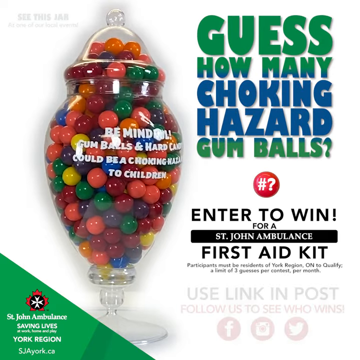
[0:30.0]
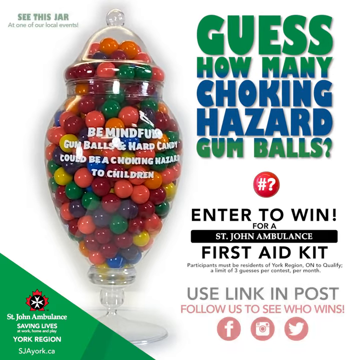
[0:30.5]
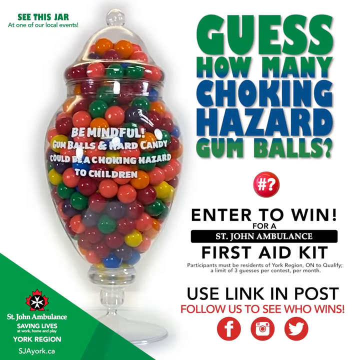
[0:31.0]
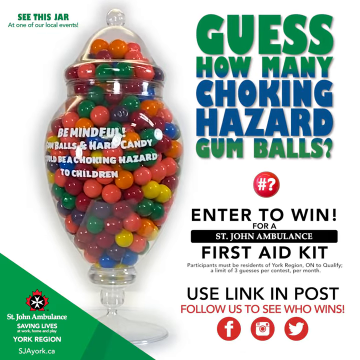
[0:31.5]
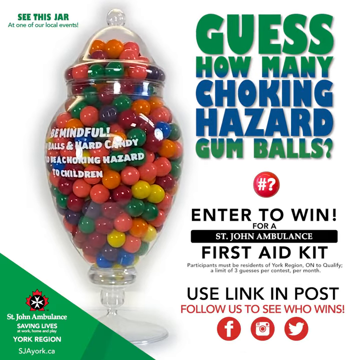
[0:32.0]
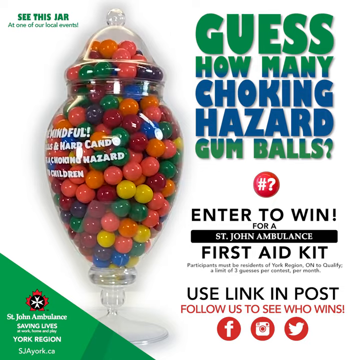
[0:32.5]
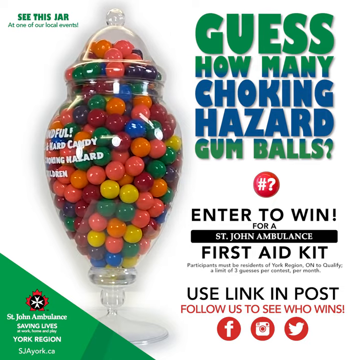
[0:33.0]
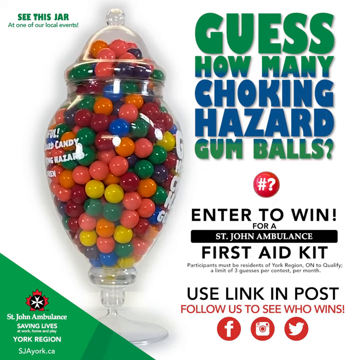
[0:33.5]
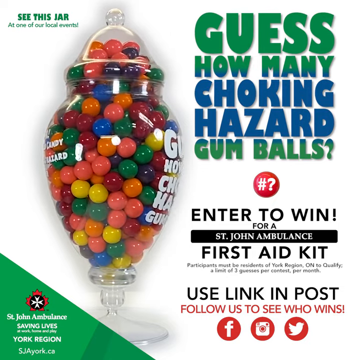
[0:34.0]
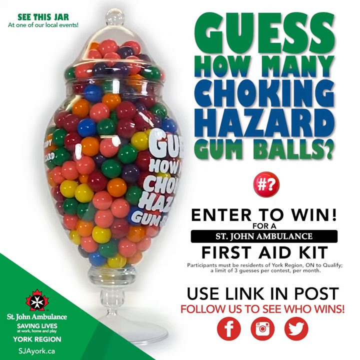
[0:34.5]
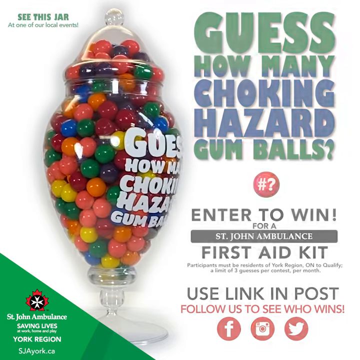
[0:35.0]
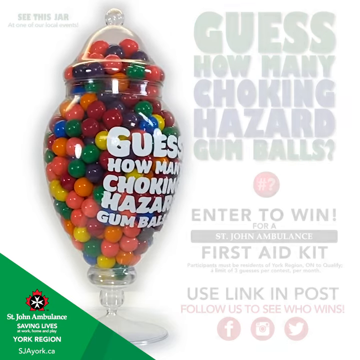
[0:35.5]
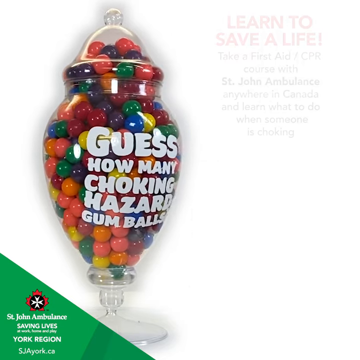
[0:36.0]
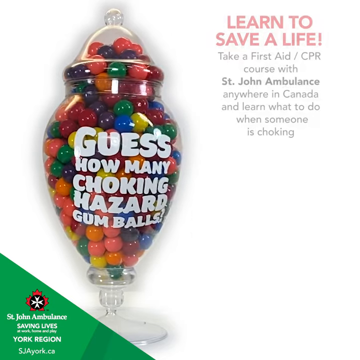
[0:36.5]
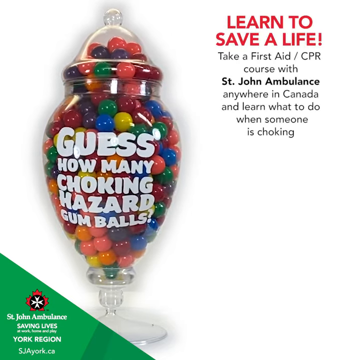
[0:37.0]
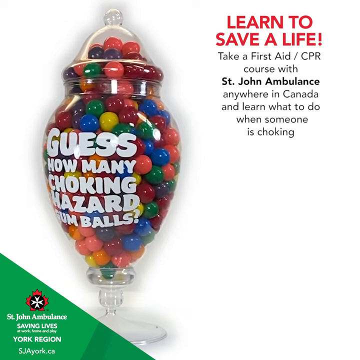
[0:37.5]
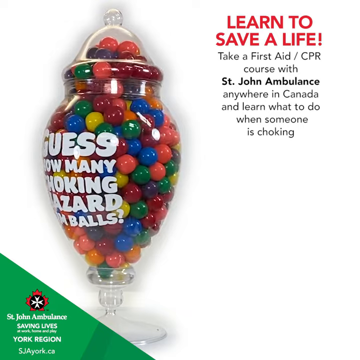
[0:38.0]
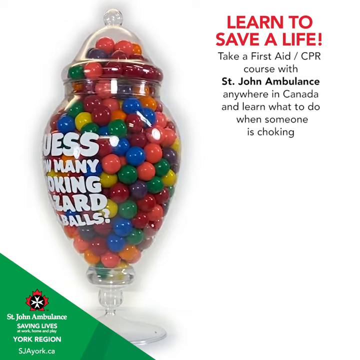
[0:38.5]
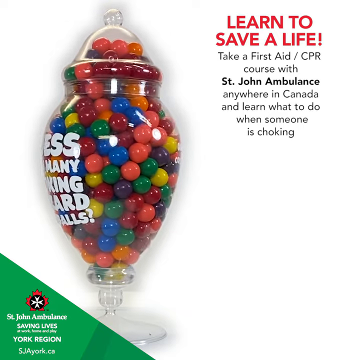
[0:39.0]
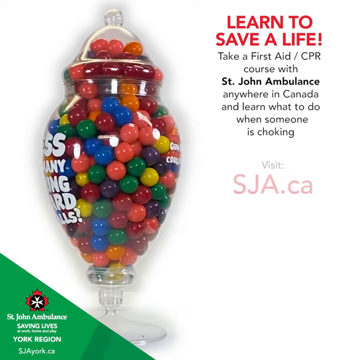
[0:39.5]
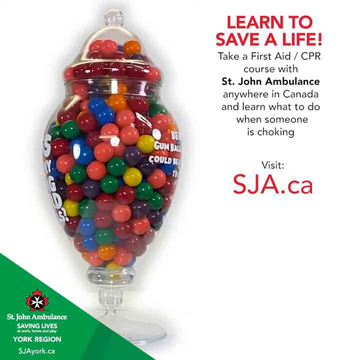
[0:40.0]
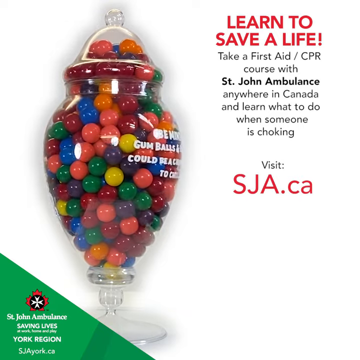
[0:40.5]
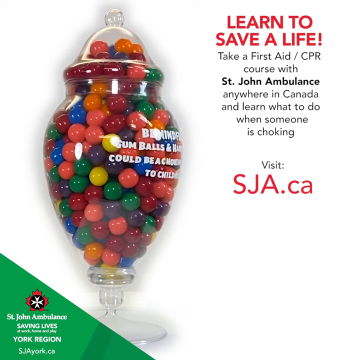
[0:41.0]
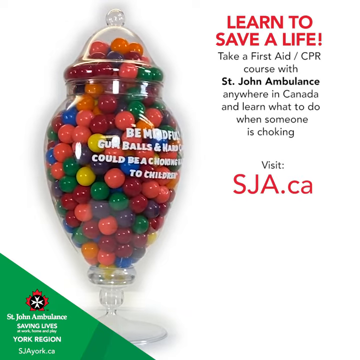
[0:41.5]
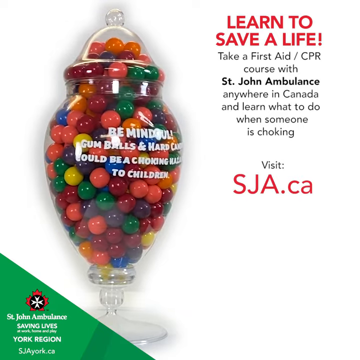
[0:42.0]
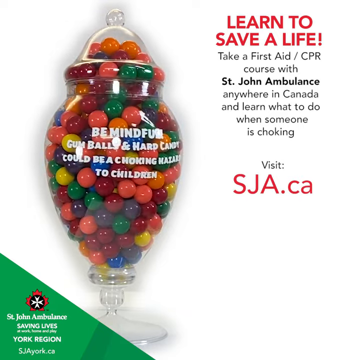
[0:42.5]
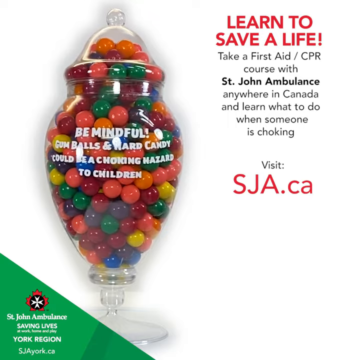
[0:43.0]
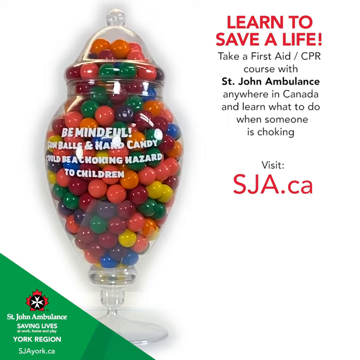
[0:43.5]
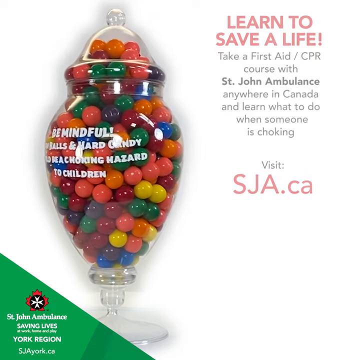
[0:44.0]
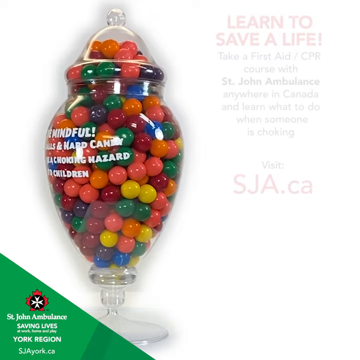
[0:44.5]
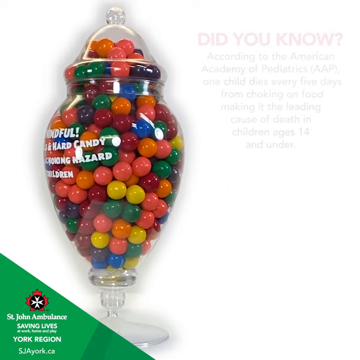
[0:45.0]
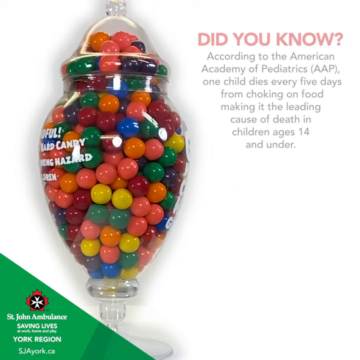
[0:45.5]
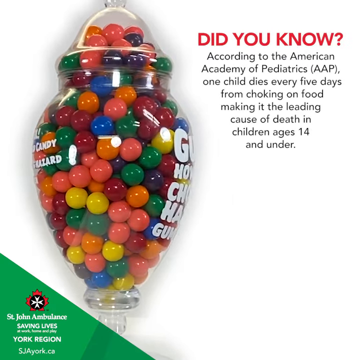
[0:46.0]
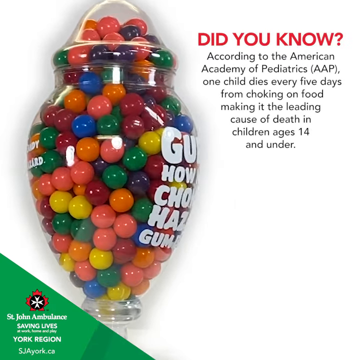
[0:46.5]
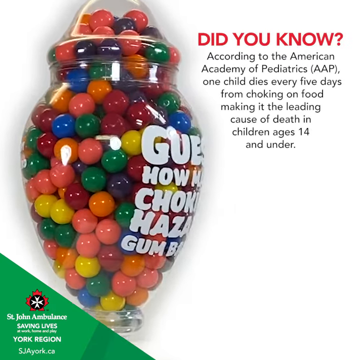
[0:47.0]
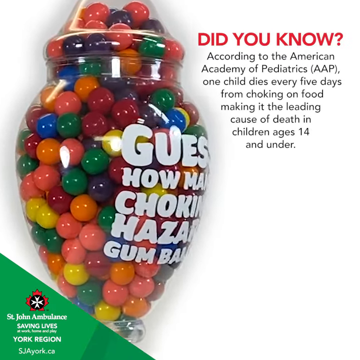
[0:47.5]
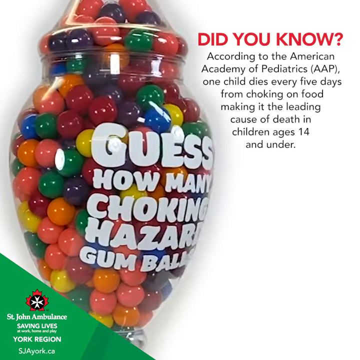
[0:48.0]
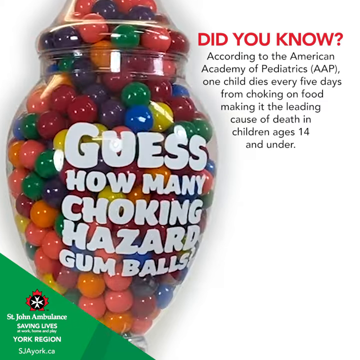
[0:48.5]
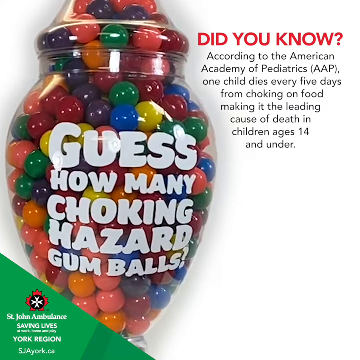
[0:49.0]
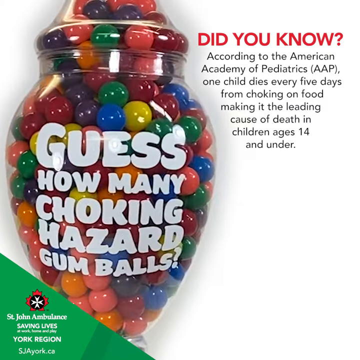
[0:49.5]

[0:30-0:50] Text in black reads "use link in post", and underneath it "follow us to see who wins", above three social media icons: Facebook, then Instagram, then a Twitter or X icon. That text disappears, and next to the rotating gumball red text reads "learn to save a life", followed in black text by "take a first aid/CPR course with St. John Ambulance anywhere in Canada and learn what to do when someone is choking" and "visit SJA.ca". As that text disappears, "did you know" appears in red lettering again, followed by "according to the American Academy of Pediatrics, one child dies every five days from choking on food making it the leading cause of death in children ages 14 and under." The video then kind of zooms in on the container of gumballs as it continues to spin around, showing the number of gumballs inside.